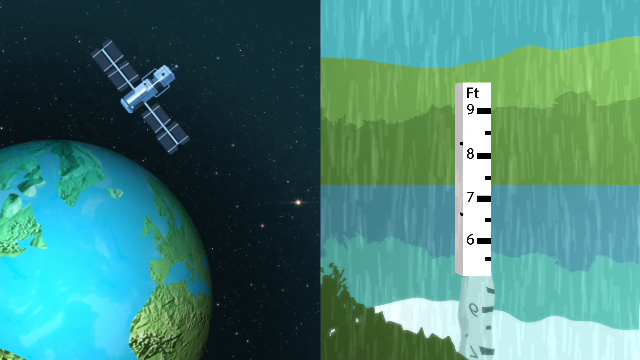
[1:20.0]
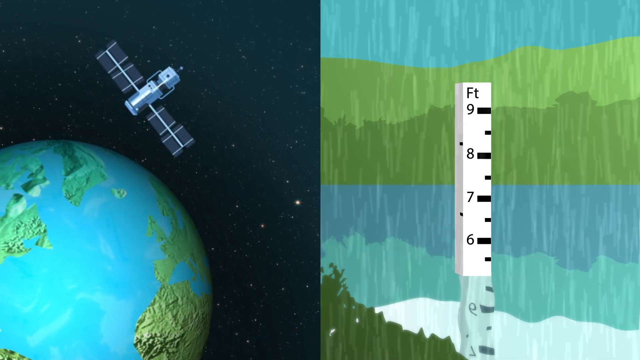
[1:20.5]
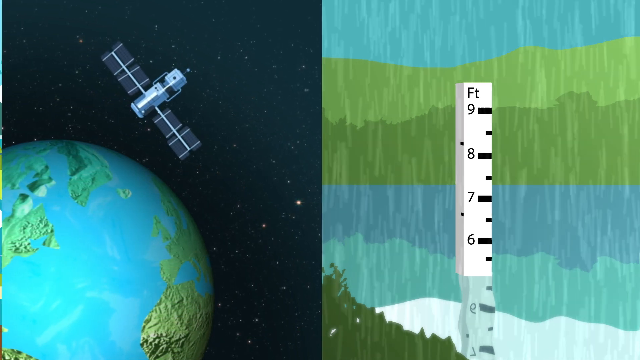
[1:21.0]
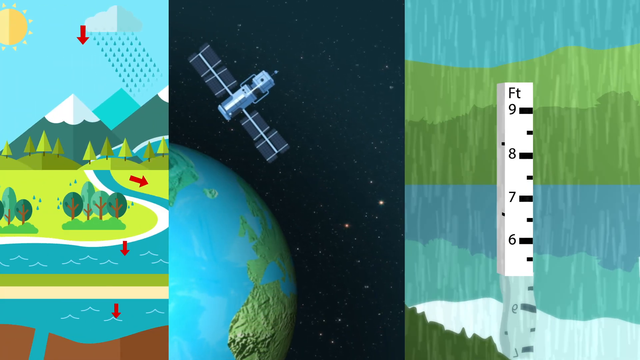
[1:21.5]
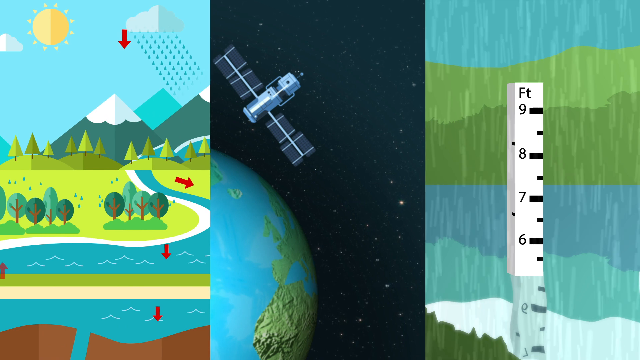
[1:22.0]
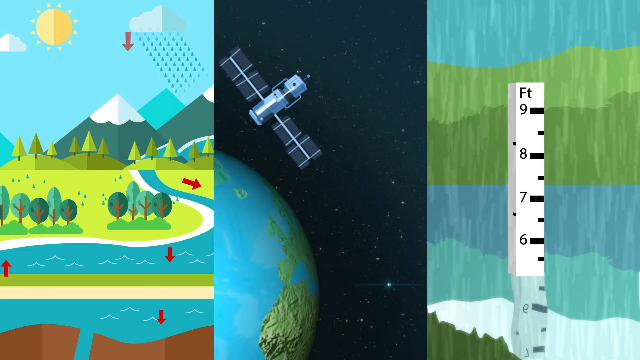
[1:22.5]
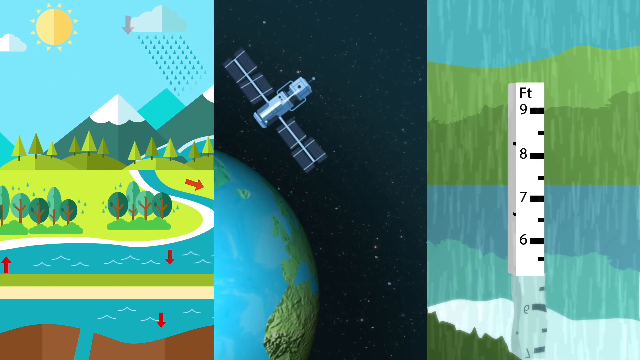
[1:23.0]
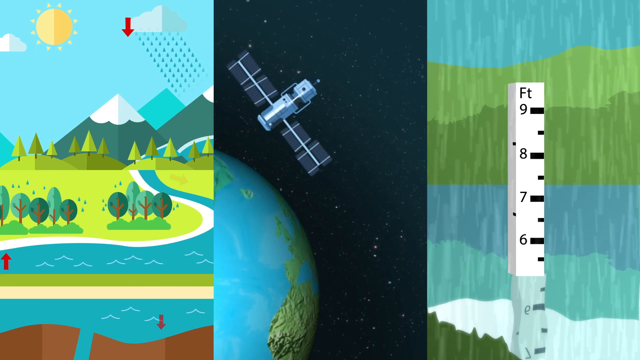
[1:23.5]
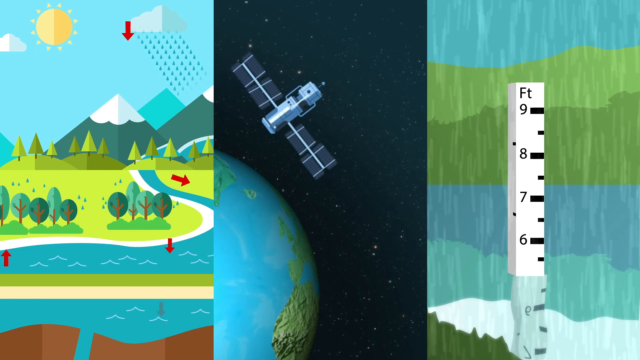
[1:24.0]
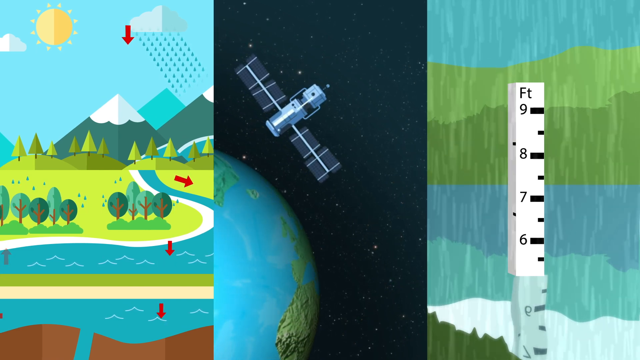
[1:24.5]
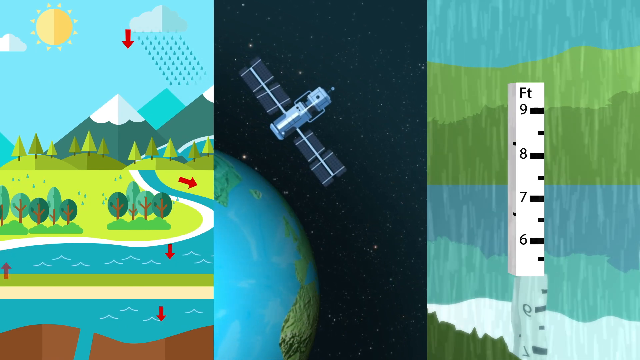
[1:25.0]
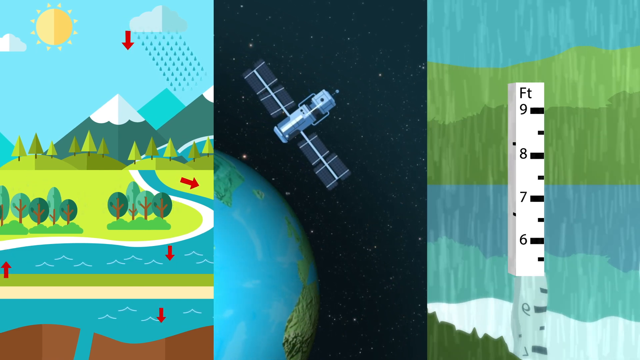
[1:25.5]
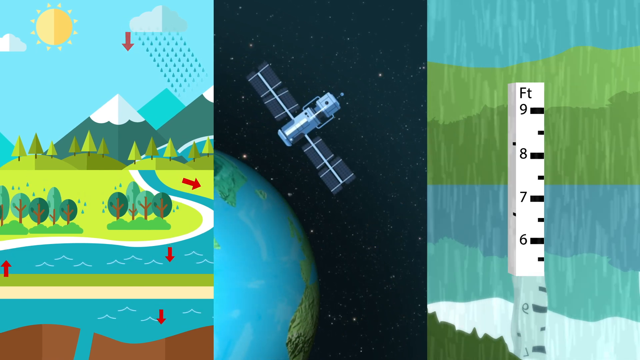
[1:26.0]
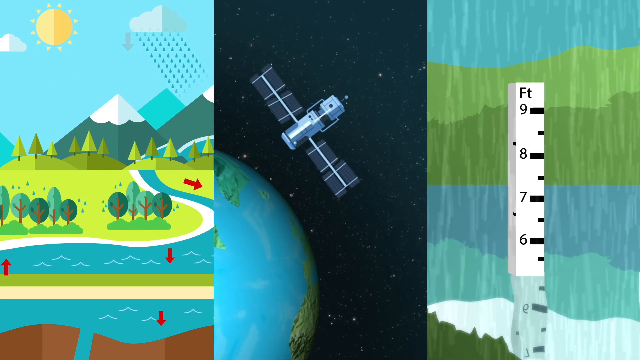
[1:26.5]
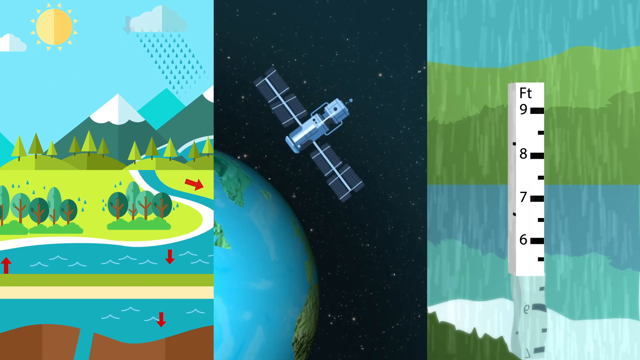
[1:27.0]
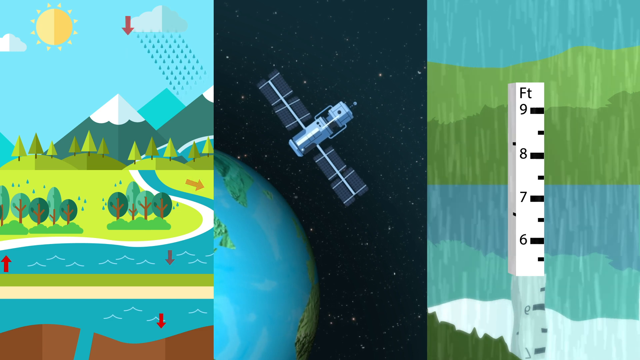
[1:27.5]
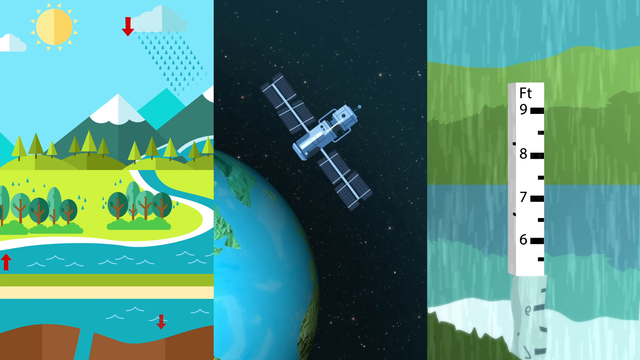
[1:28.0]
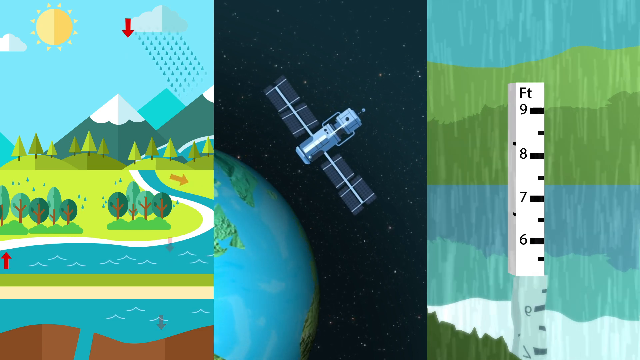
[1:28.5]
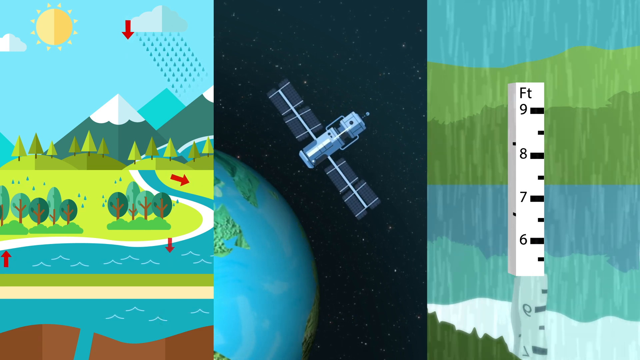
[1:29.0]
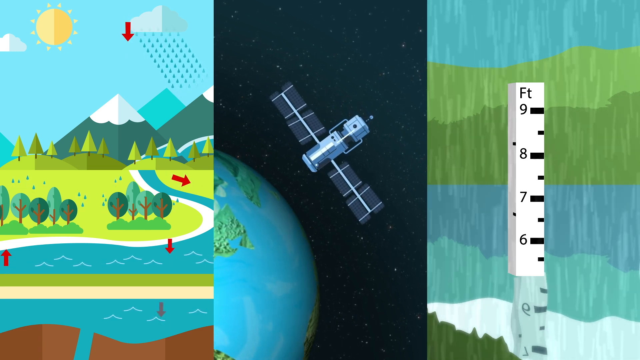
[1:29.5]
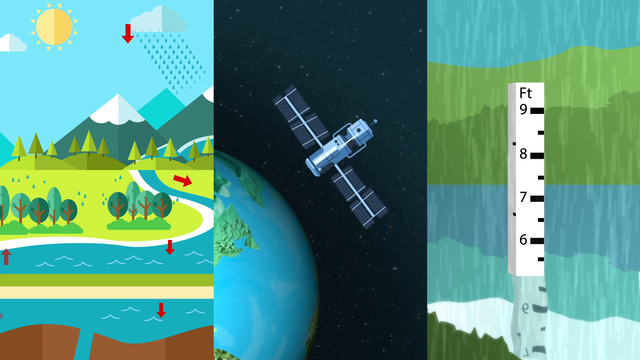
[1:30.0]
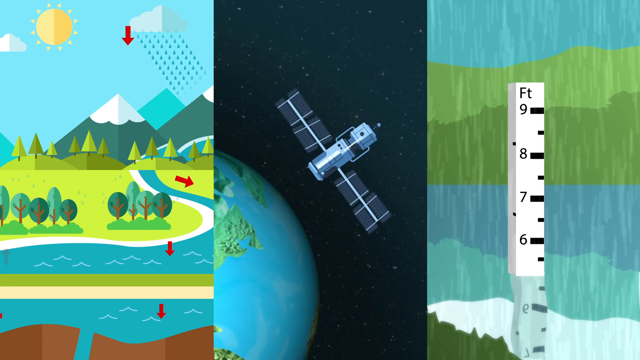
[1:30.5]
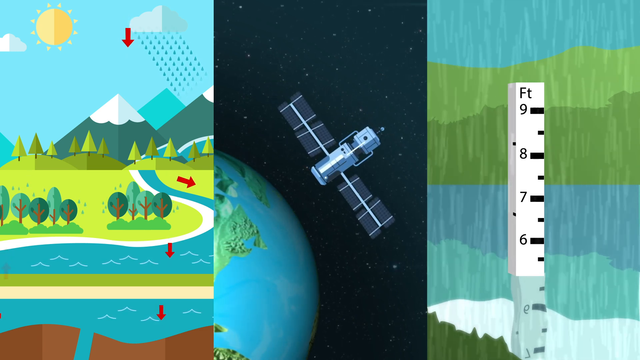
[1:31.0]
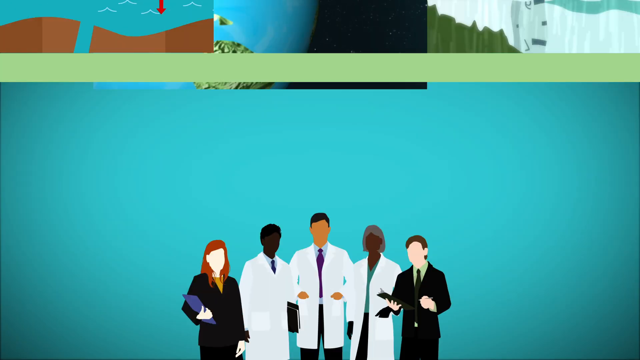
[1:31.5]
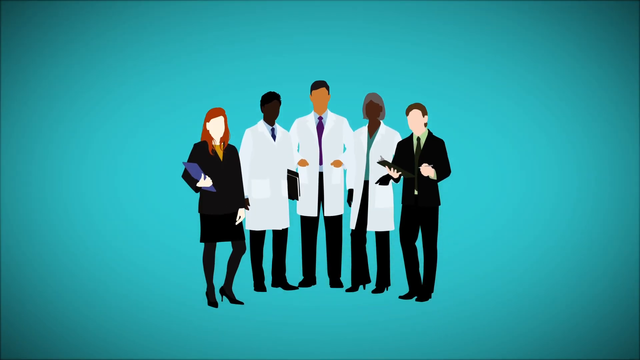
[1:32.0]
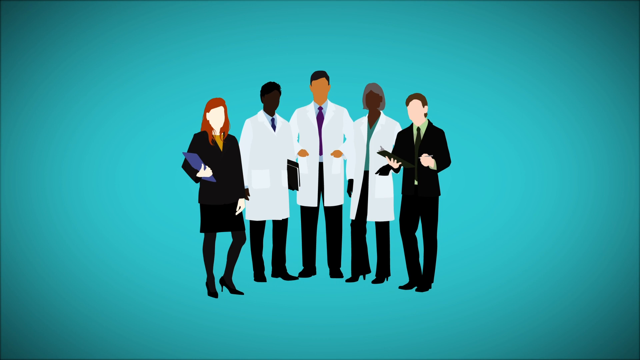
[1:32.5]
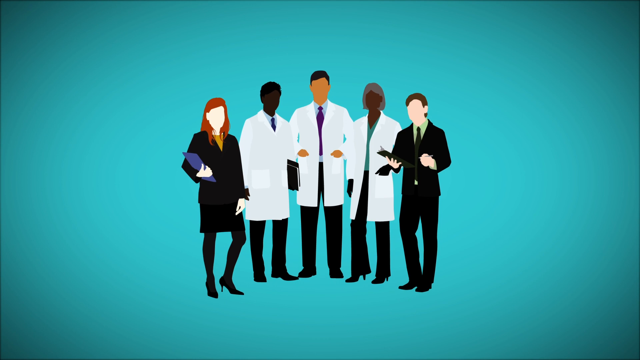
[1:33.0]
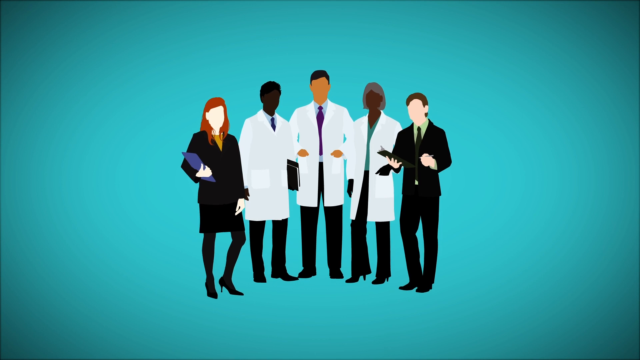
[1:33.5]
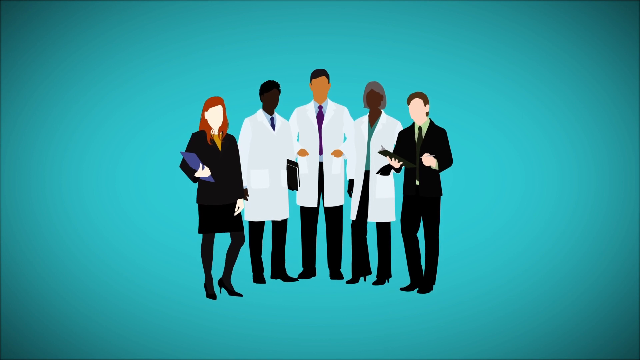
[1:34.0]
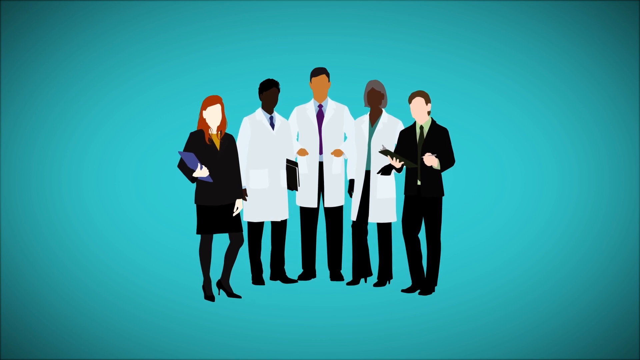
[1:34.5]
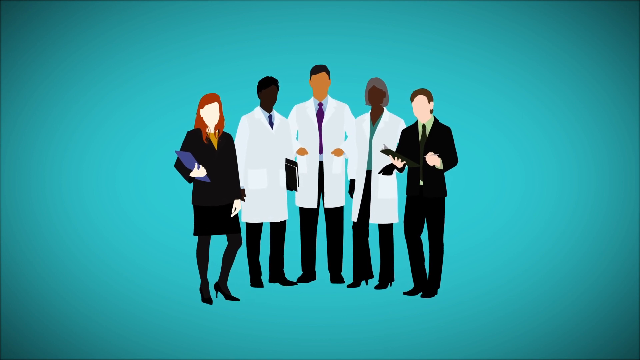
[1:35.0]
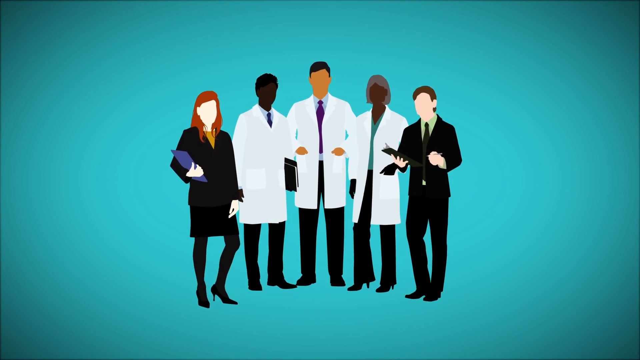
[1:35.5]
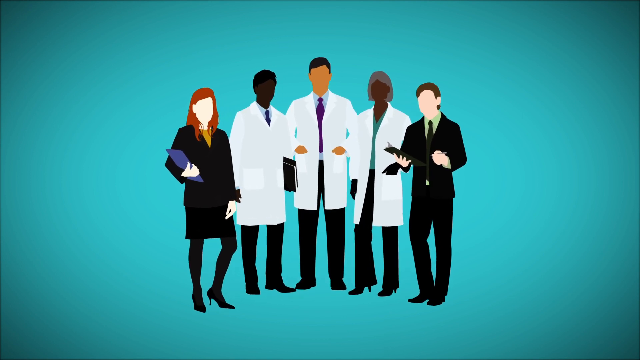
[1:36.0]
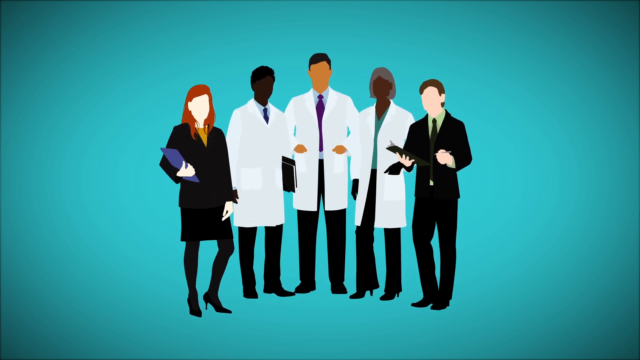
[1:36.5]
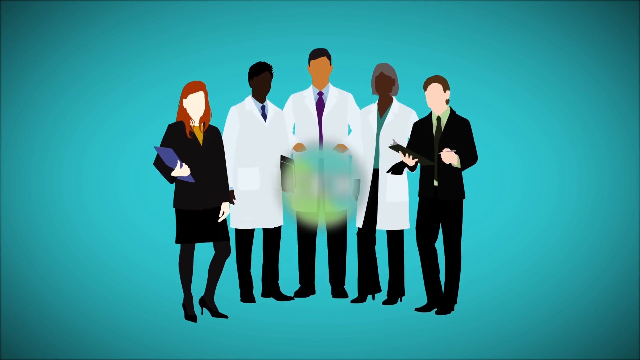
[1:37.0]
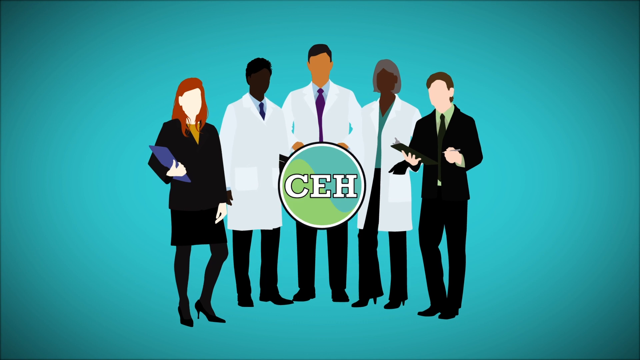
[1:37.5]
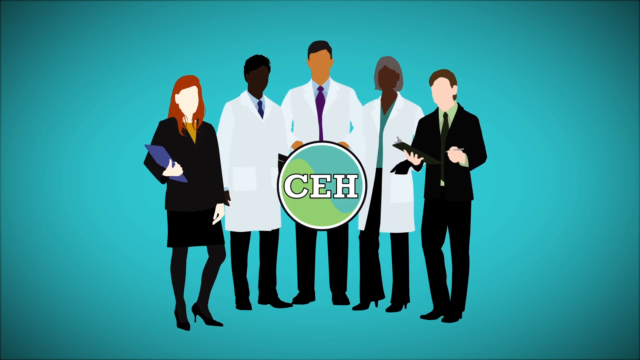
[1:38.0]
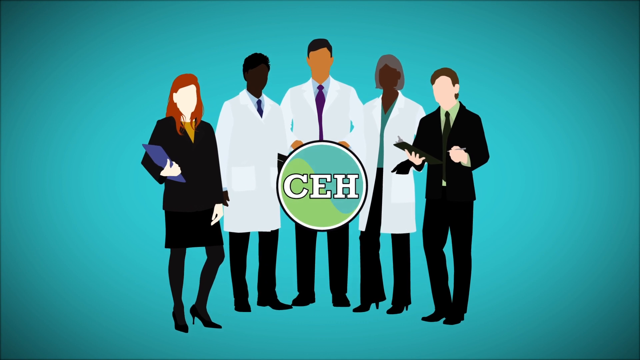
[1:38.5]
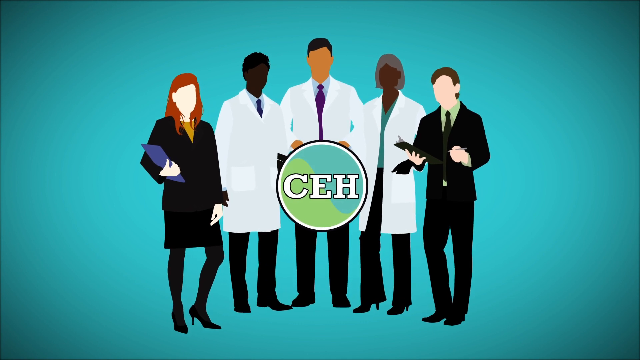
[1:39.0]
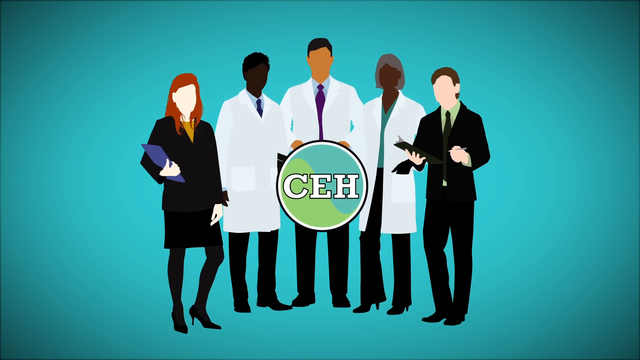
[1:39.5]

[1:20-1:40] The split screen shows the Earth, night sky and satellite on the left and the measuring stick gauging the water height on the right. Another picture then comes in from the left, splitting the screen into three. This leftmost picture is the earlier landscape cut to show only the land, without the ocean: the sun, one cloud raining on the mountain, and the river flowing down from the mountain toward the front of the screen. A red arrow points down at the cloud, and a red arrow at the bottom left points up from the river. The scene then switches to a primarily blue background showing five cartoon people standing together, with no details on their faces. On the left is a white woman with red hair in a black dress, holding a blue clipboard. Next to her is a man in a white coat, blue tie and black pants who appears to be African-American. In the middle is a man of a medium brown color with brown hair, wearing a white coat and black pants, with his hands in his pockets. Next to him is a relatively dark-skinned woman in a white coat and black pants. On the far right is a white man in a black suit holding a black clipboard. The scene zooms in and a CEH logo appears: white letters on a blue and green circle that looks kind of like a yin-yang sign.